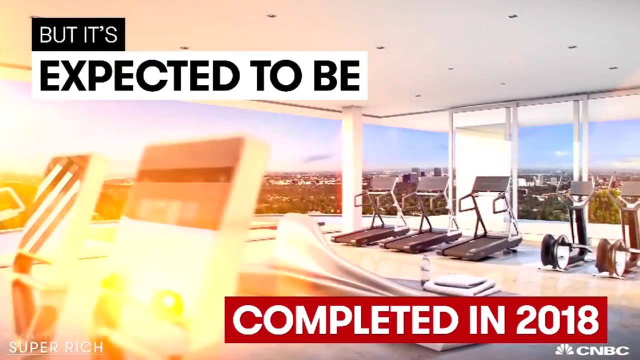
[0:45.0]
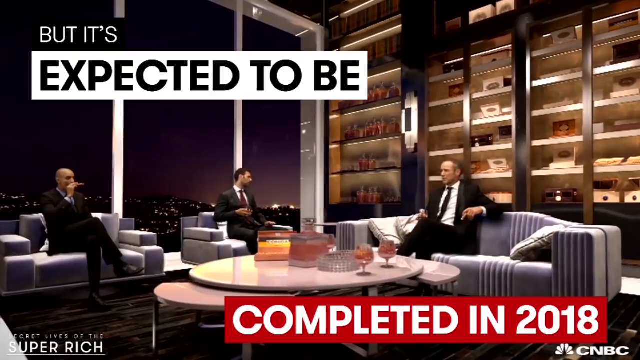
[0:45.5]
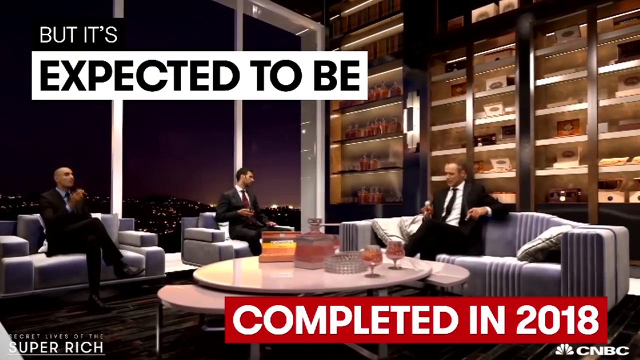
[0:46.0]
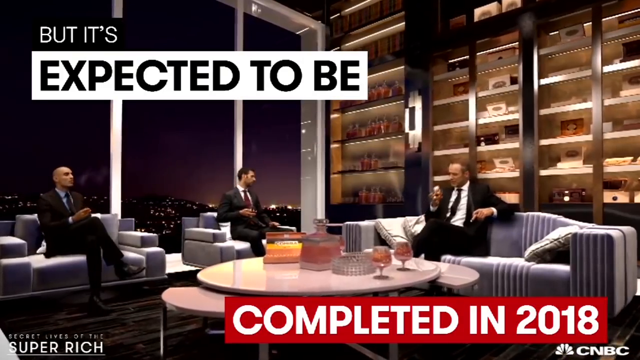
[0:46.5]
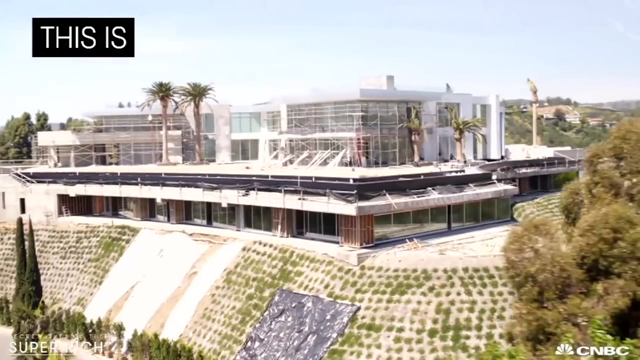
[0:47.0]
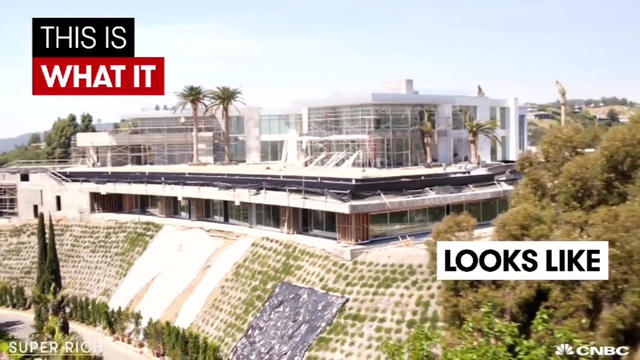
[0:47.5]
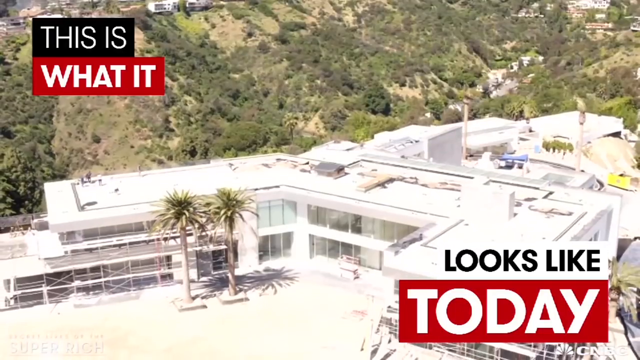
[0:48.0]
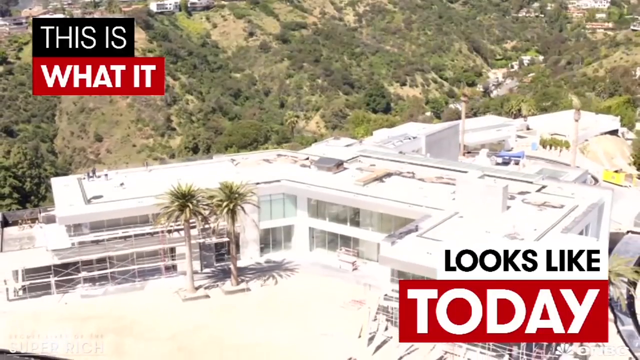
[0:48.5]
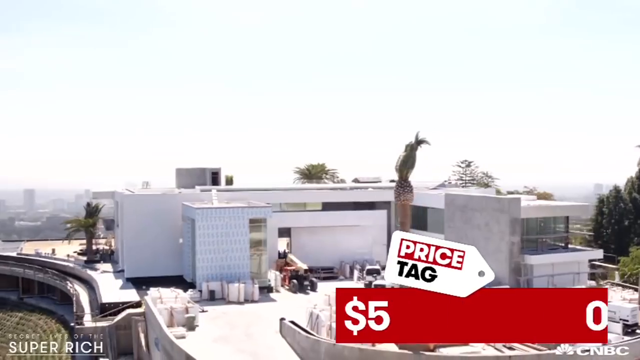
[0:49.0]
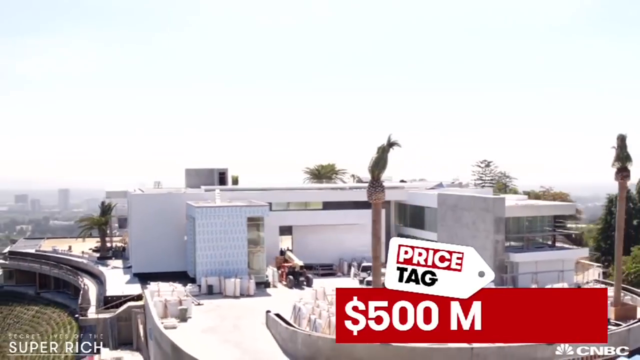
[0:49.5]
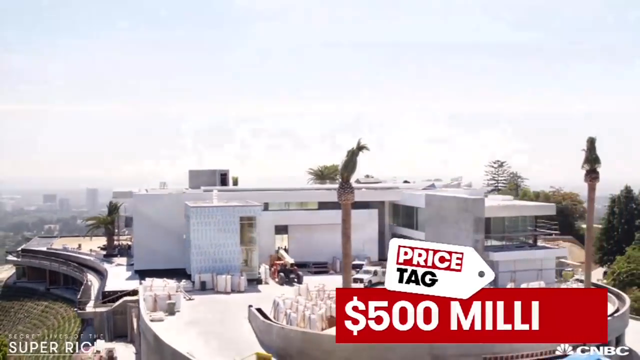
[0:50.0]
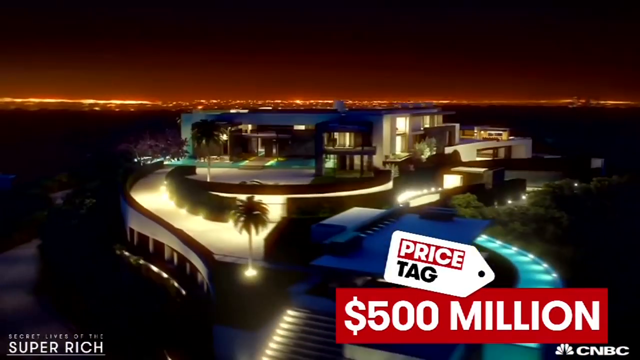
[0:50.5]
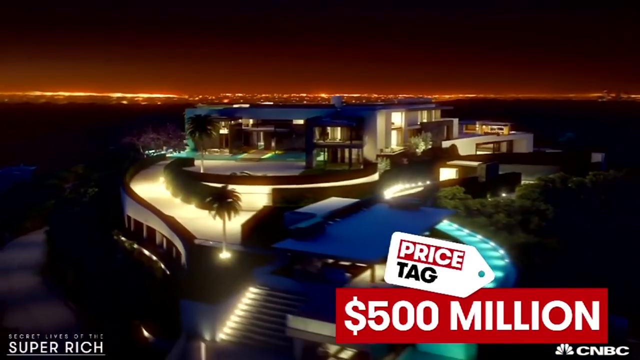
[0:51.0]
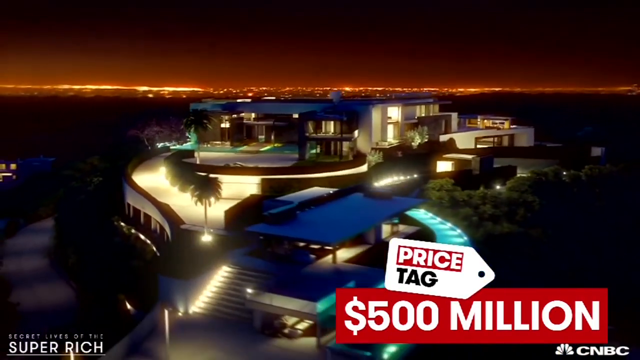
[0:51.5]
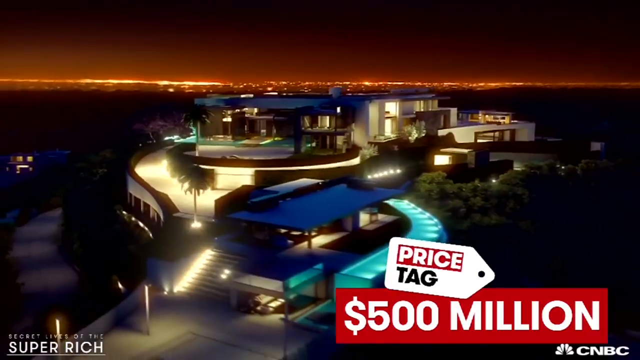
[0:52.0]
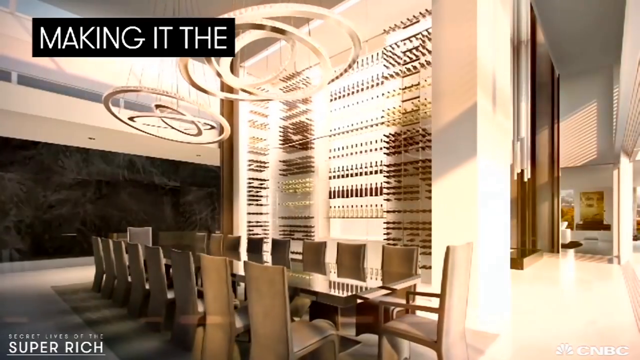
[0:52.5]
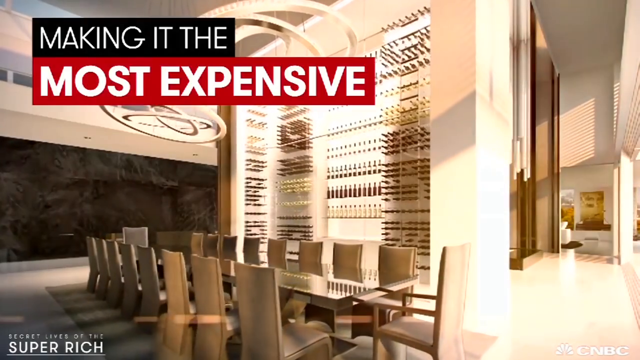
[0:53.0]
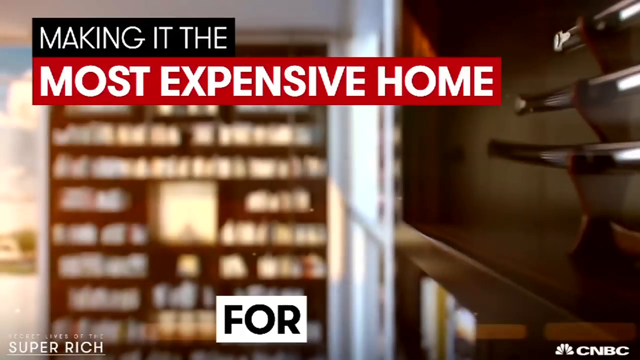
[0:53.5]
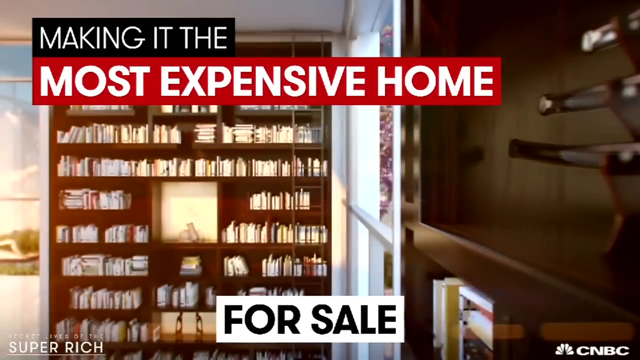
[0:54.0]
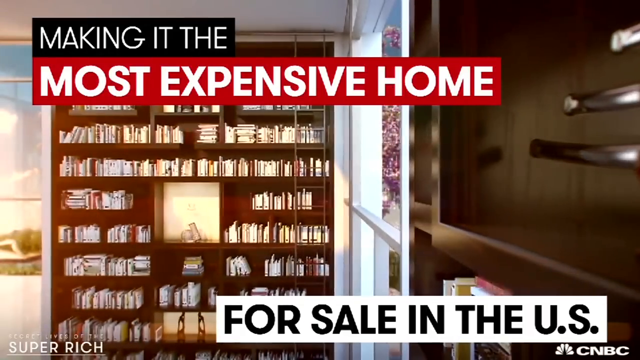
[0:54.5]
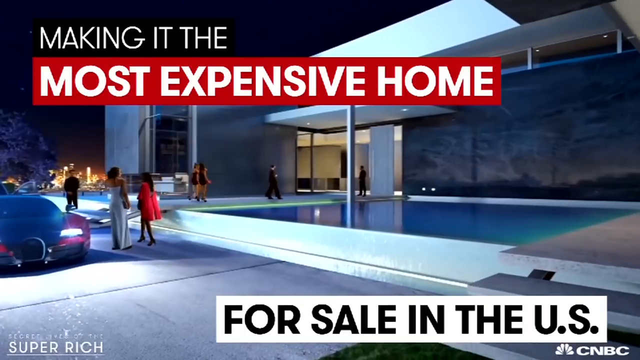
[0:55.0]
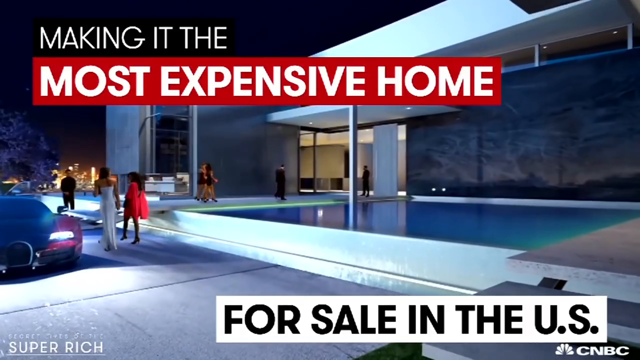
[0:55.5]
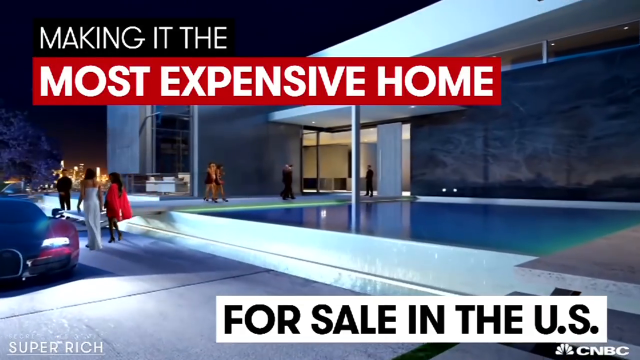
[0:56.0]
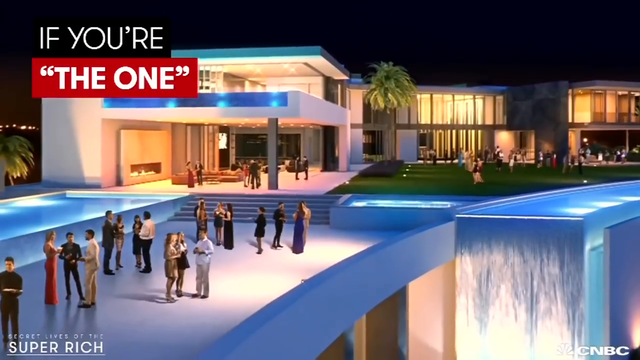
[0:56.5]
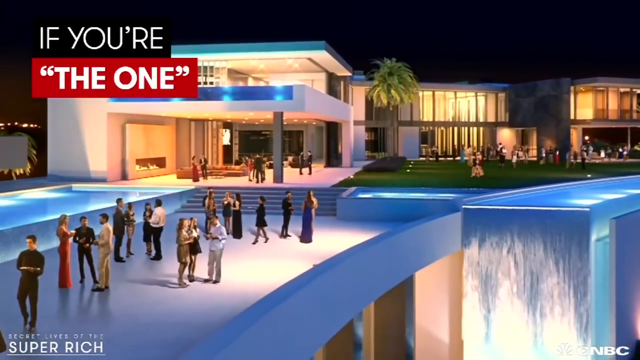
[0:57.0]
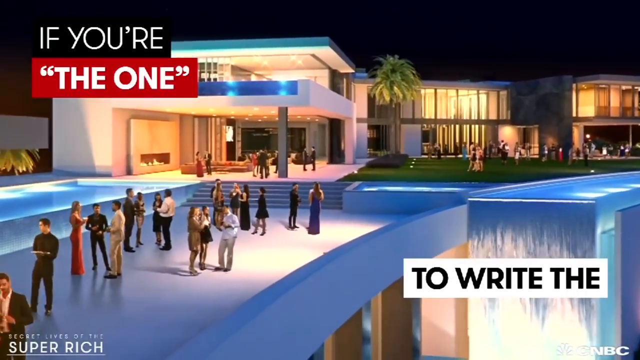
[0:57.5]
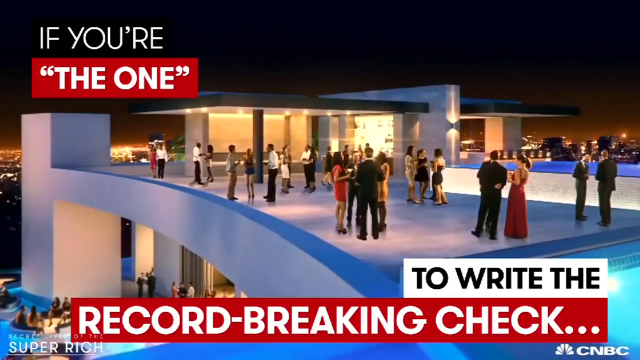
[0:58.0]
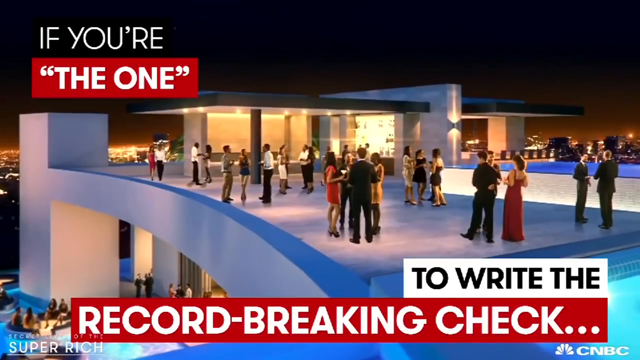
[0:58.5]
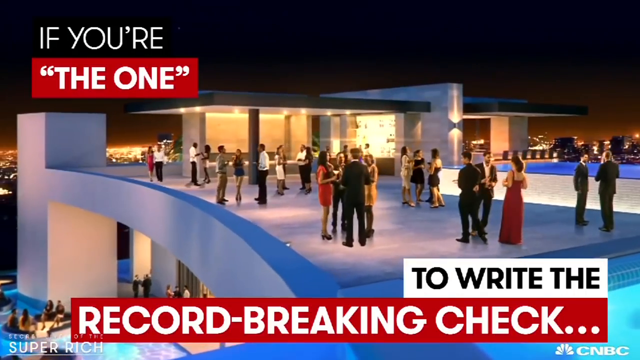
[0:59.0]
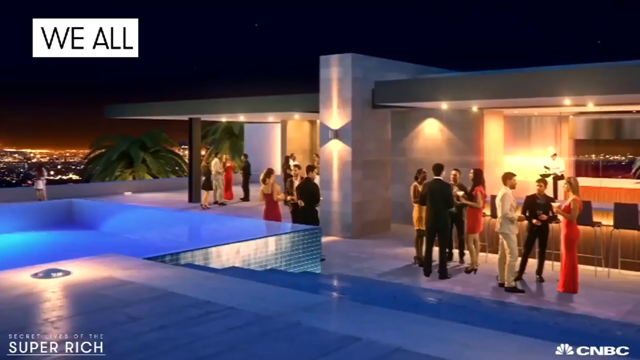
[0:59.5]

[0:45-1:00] Words on the screen say the home will be completed in 2018 and that it is worth 500 million dollars. There appear to be many large outdoor areas where people can socialize, and the place looks very upscale, with waterfalls. The scenes show what the home would look like during a cocktail party or some kind of large gathering, with the people all dressed up in fancy clothing, wearing tuxes and evening gowns.